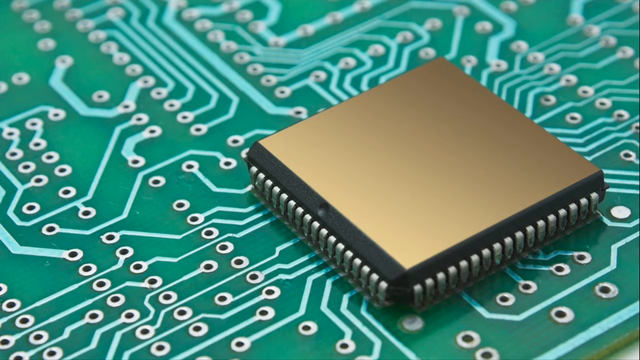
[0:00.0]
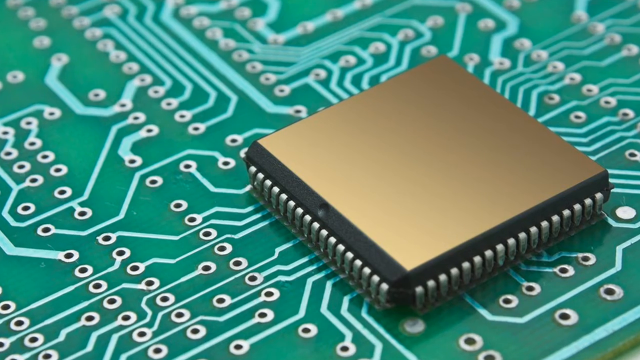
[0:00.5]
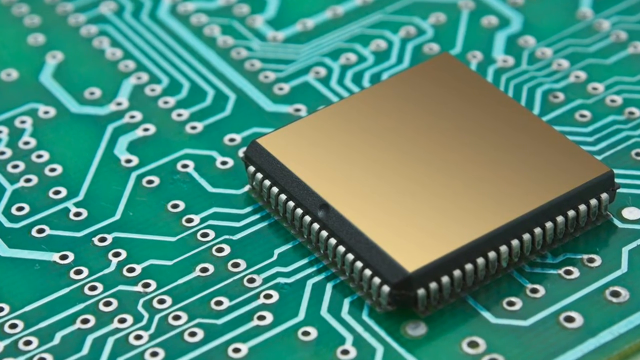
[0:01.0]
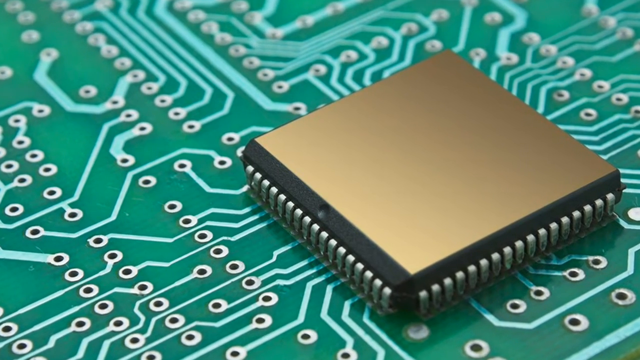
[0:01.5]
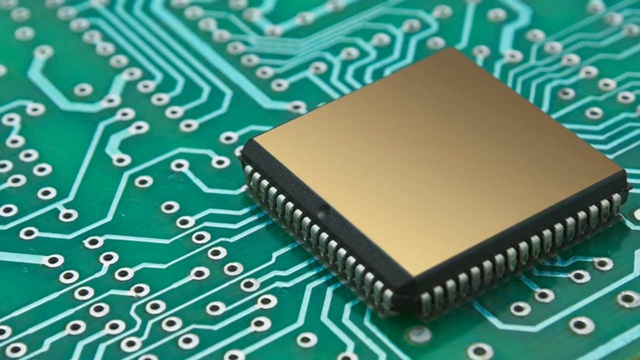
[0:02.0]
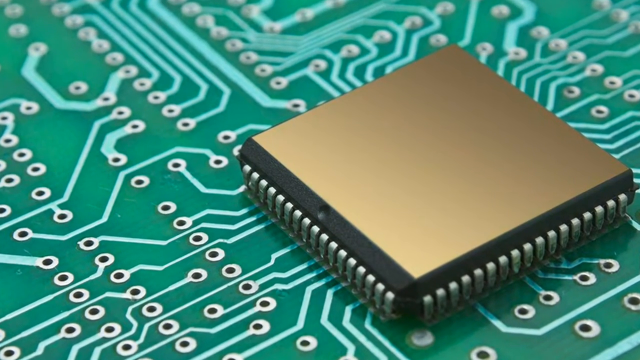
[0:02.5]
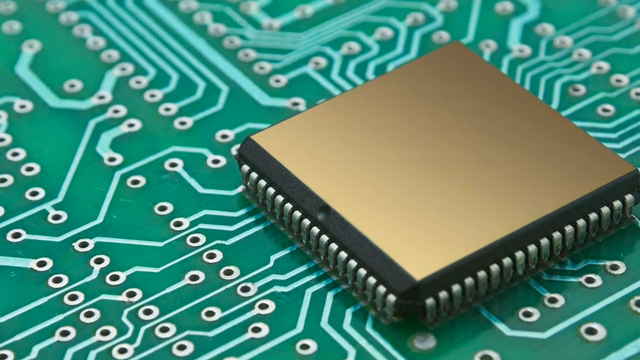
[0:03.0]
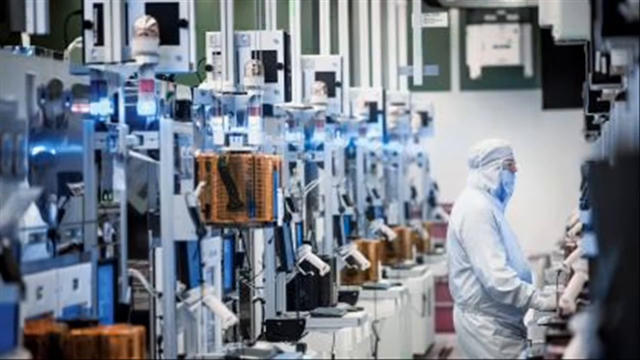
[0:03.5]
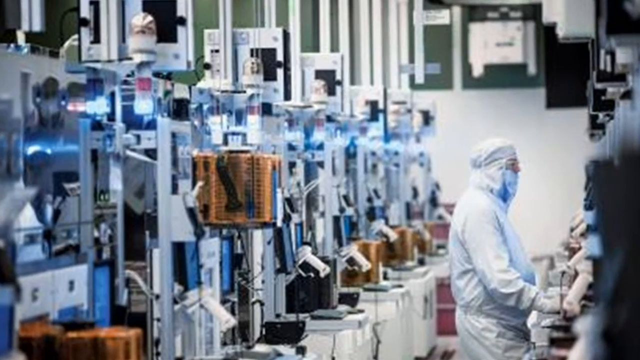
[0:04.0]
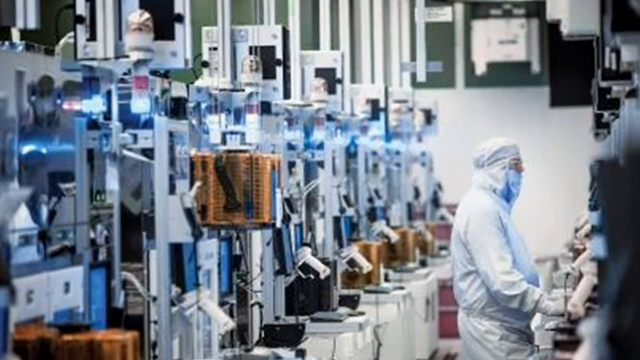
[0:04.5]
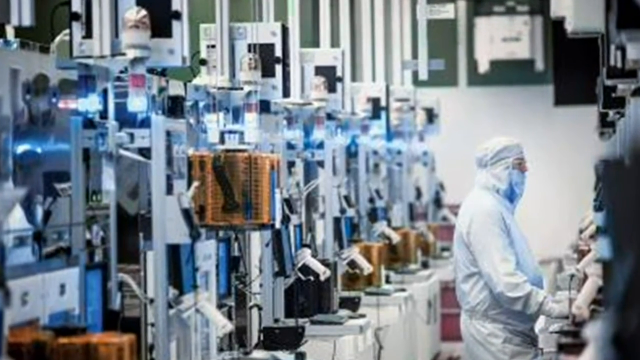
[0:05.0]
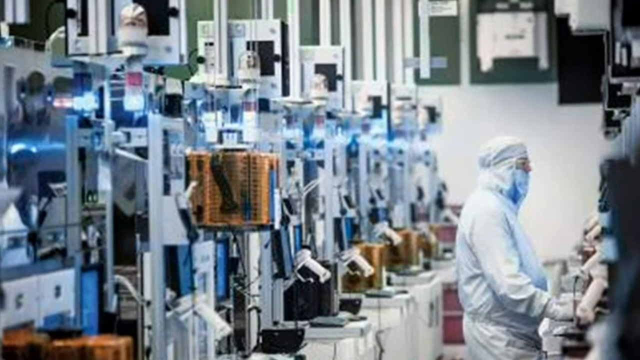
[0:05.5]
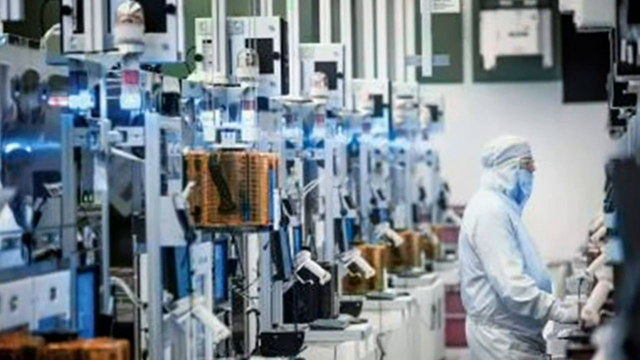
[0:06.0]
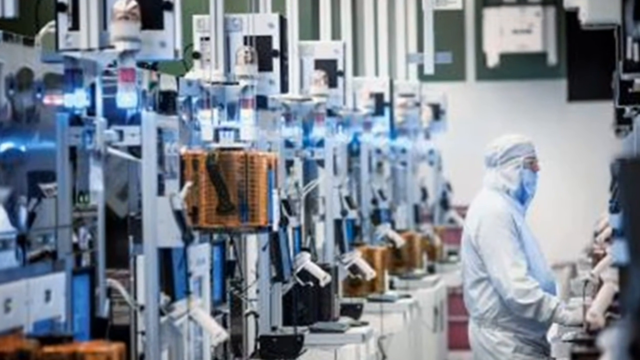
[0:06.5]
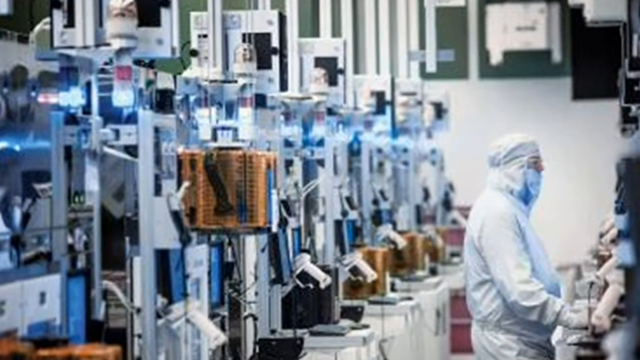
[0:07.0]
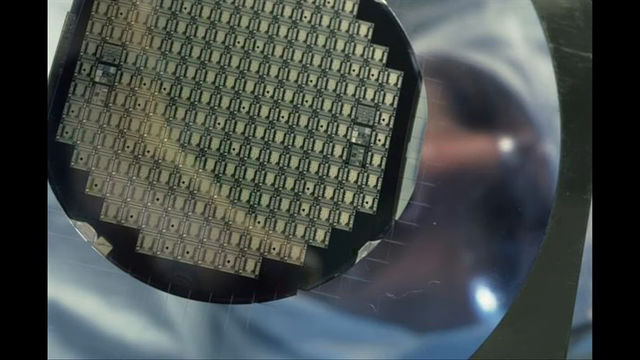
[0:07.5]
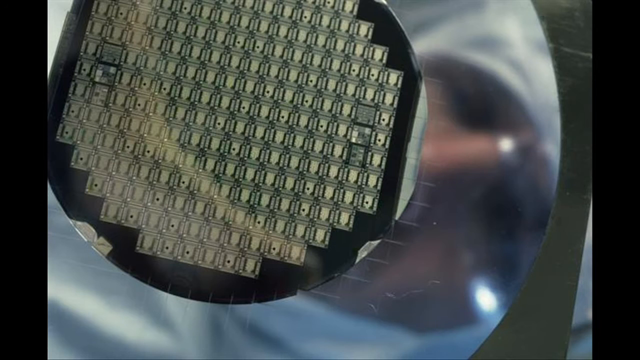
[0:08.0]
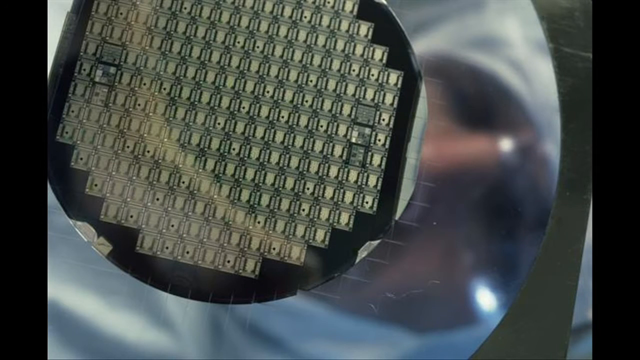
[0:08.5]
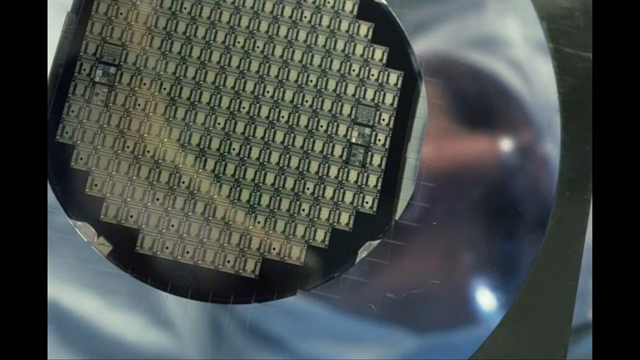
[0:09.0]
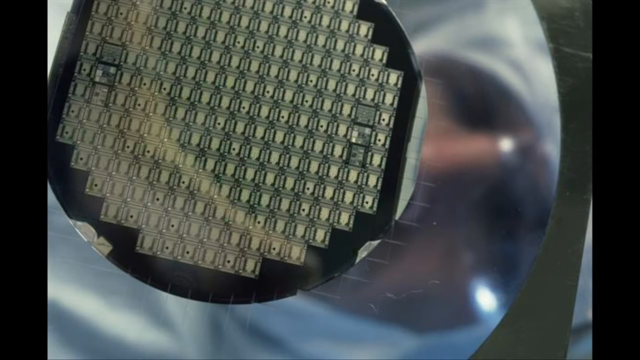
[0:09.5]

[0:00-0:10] The video opens on a computer chip on a printed circuit board. It then shifts to a very clean room where somebody wears a full clean room getup: a white hat, a white smock and a full face covering. The clean room has a large number of duplicate setups, each with some type of tower that looks like some kind of cryogenic equipment. At the end, the view shifts to what looks like a wafer, with somebody on the other side looking through a magnifying glass at a very small wafer piece.